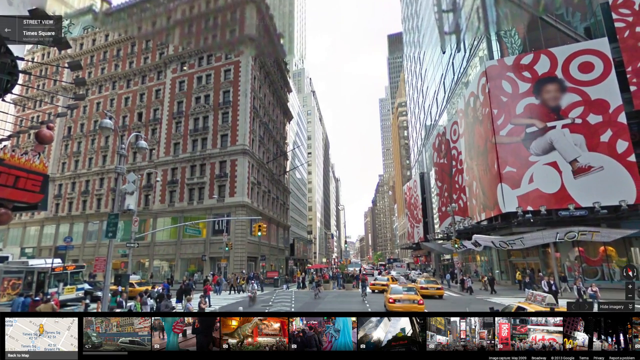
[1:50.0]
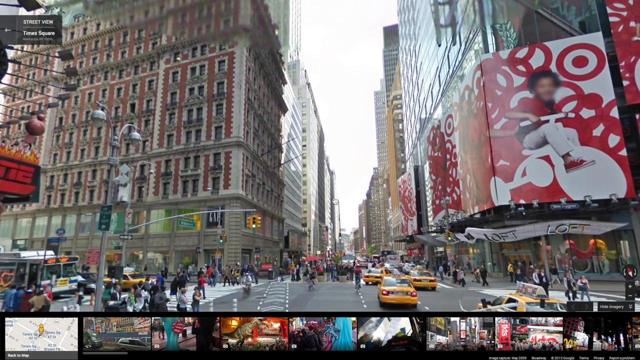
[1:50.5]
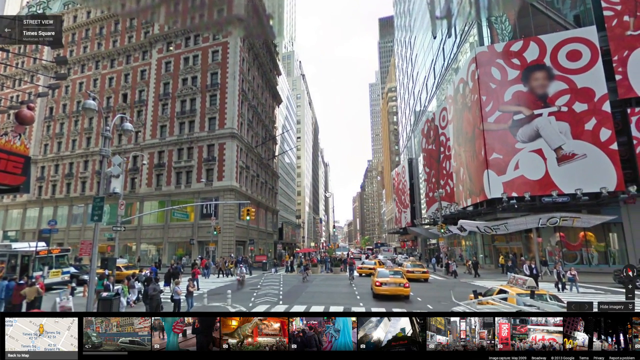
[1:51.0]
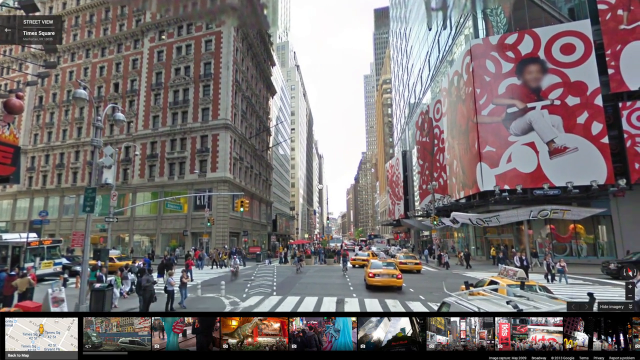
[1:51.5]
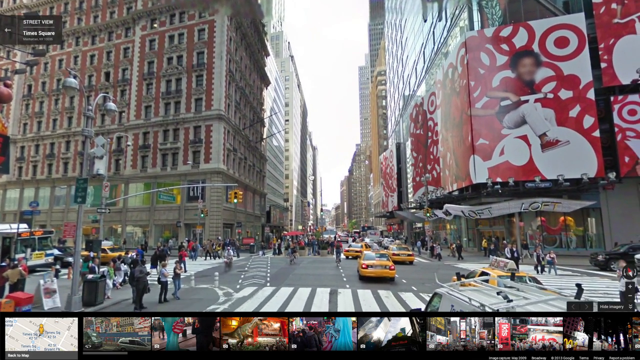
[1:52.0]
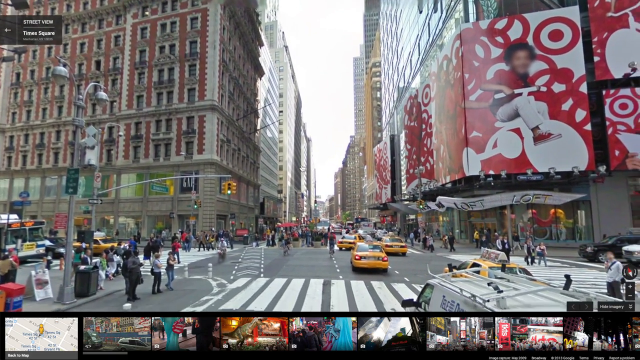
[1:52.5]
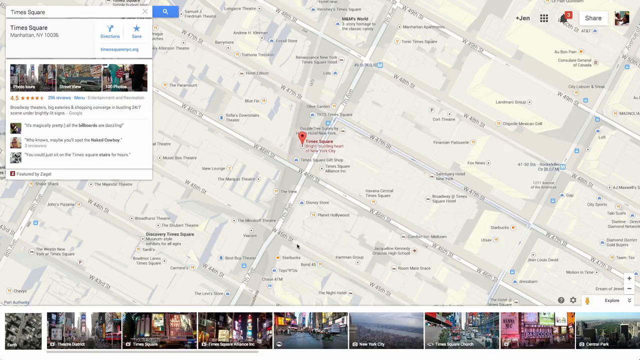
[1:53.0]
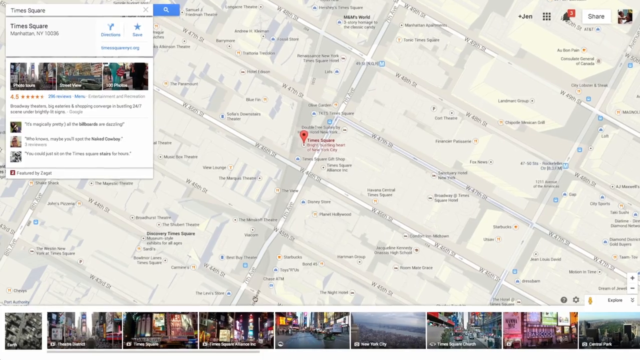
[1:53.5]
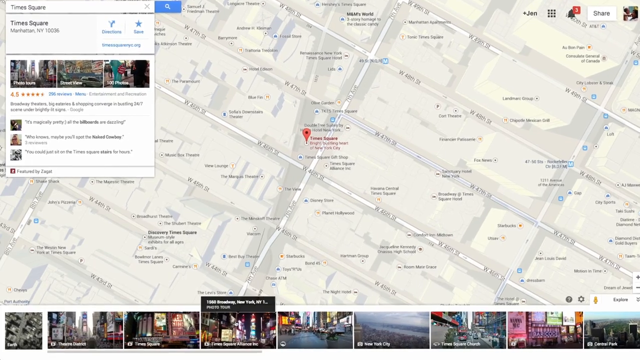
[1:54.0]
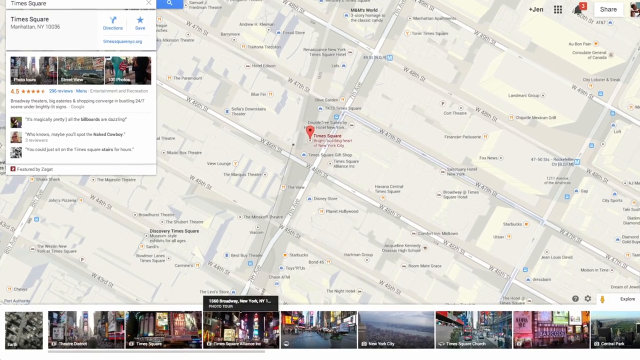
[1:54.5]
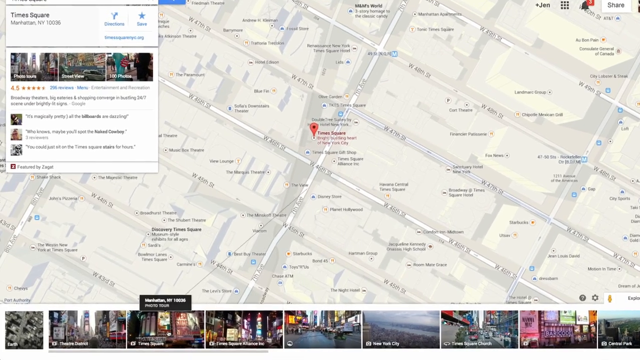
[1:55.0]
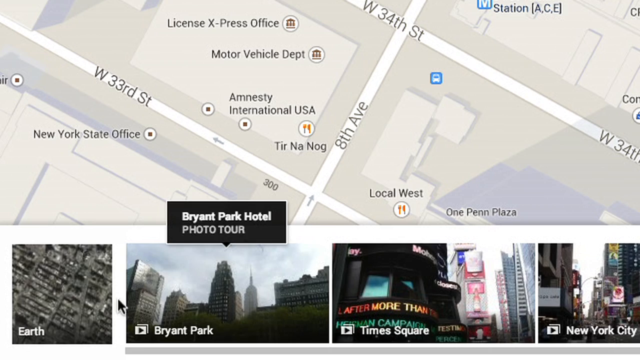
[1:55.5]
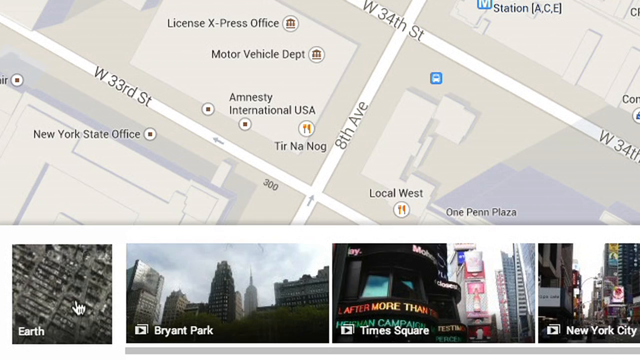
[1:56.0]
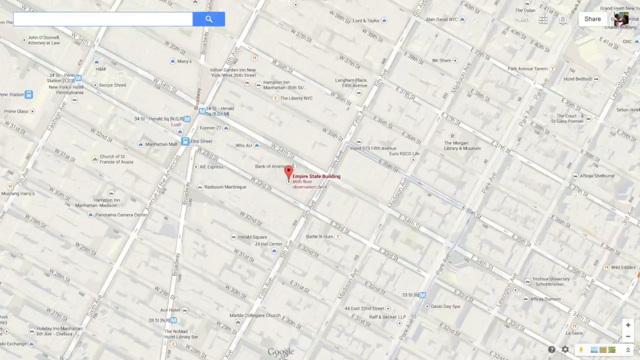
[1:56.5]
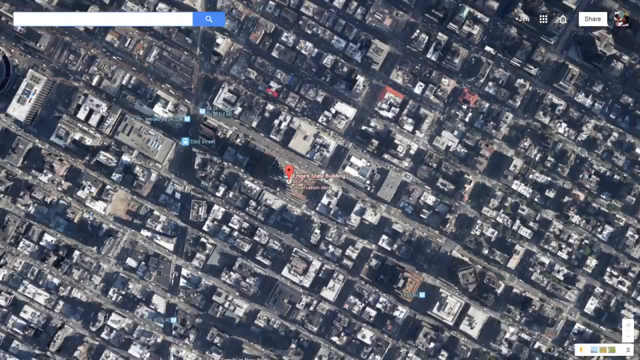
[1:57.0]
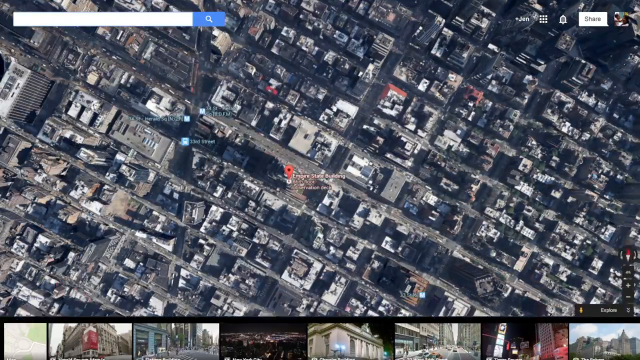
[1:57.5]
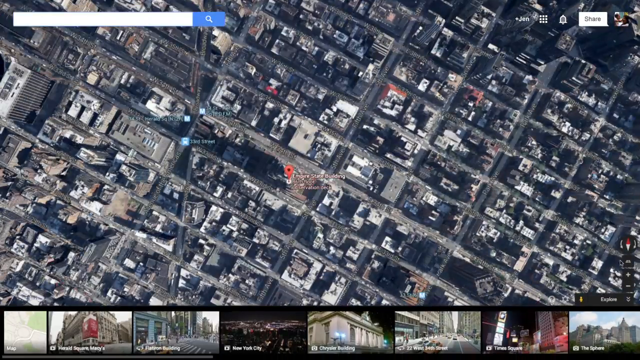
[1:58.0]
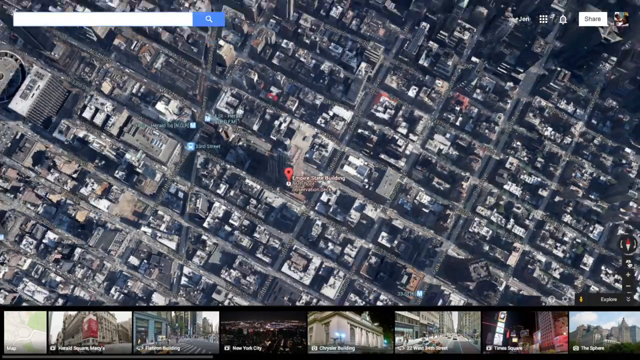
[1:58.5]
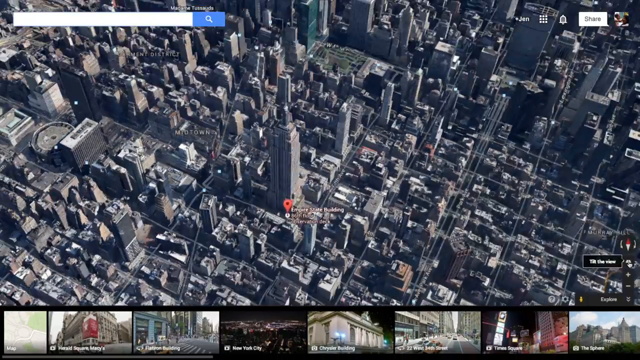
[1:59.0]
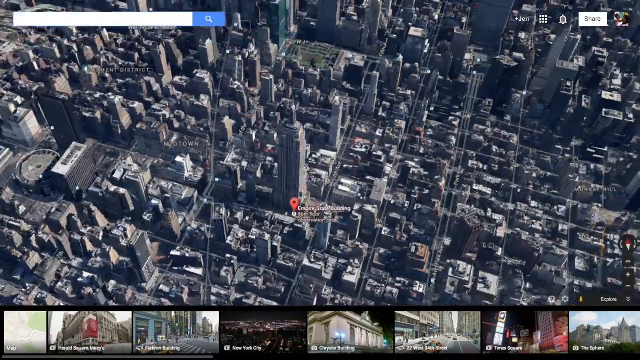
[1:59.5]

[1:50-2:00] Google Maps shows an image of downtown New York City. The person clicks on earth, and an aerial shot goes over the earth into New York City, possibly Times Square, with large ads with what look like red circles that could be a Target ad, taxis, and downtown crosswalks. The person clicks from Bryant Park to the earth option; there is a large skyscraper with a red pinpoint on it, and "Times Square" is written in the search menu box, which is what the overhead shot shows. Then there is a still photo, kind of like a 3D photo that can be manipulated, from Times Square, apparently with lots of large Target ads on the buildings.